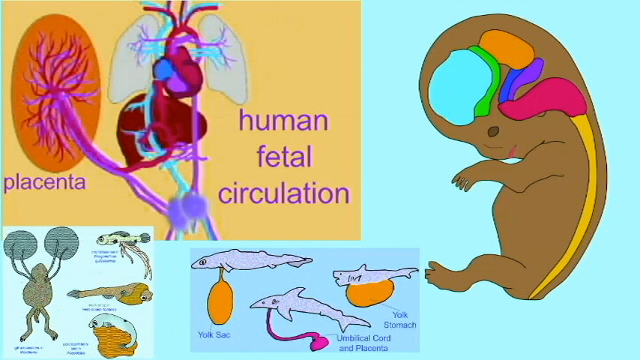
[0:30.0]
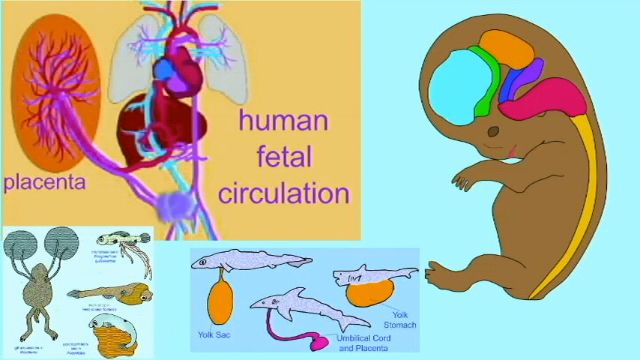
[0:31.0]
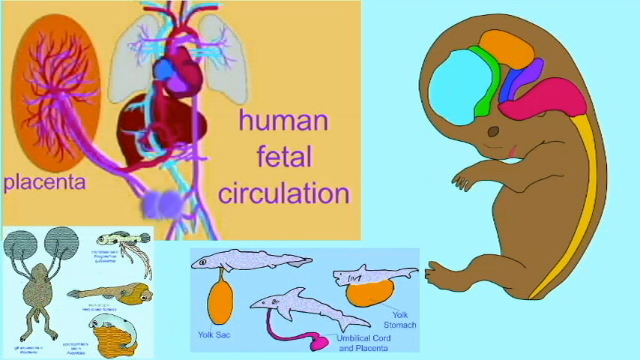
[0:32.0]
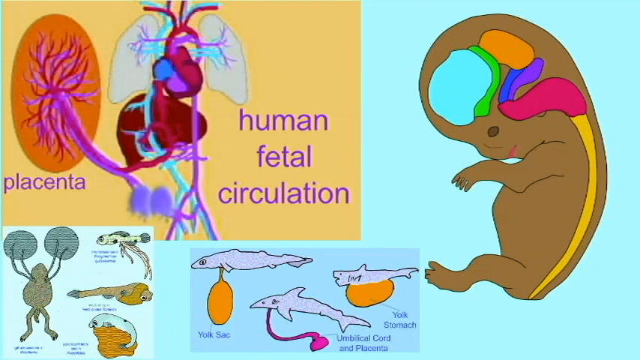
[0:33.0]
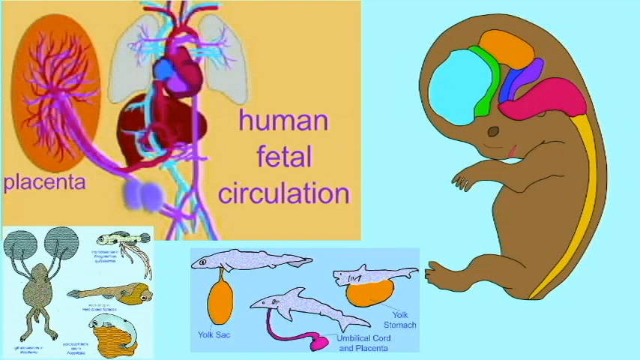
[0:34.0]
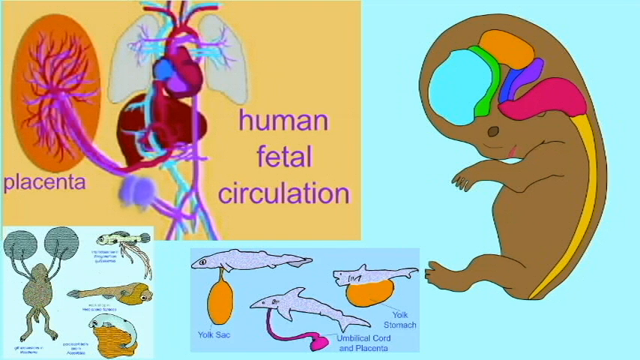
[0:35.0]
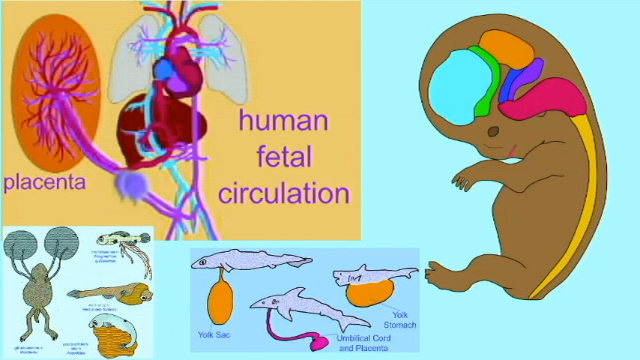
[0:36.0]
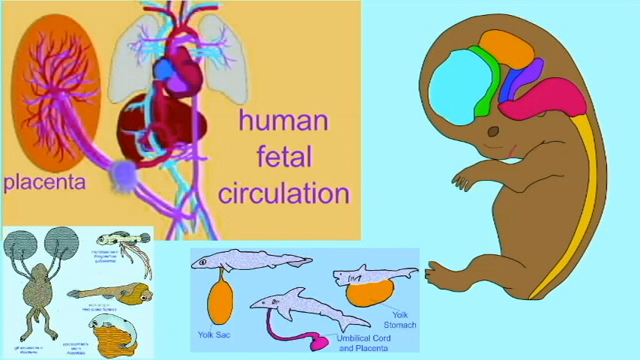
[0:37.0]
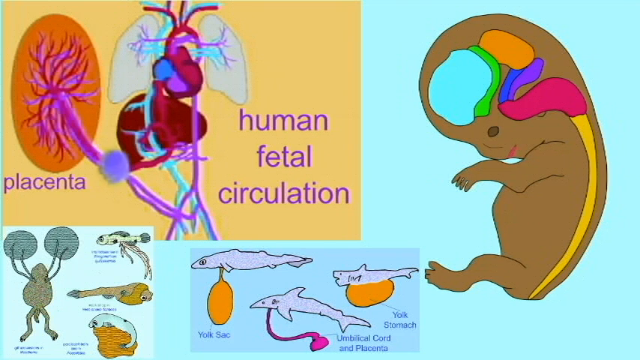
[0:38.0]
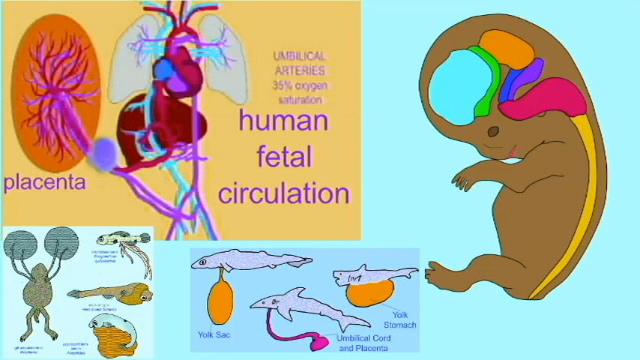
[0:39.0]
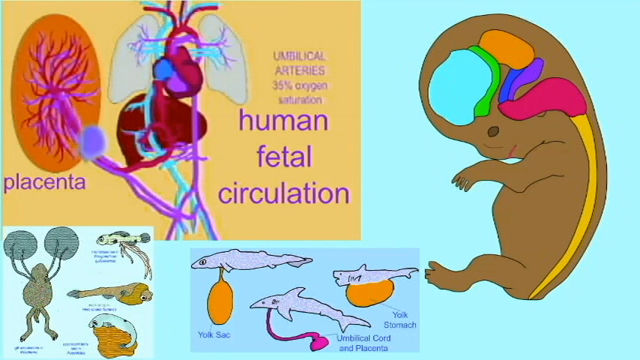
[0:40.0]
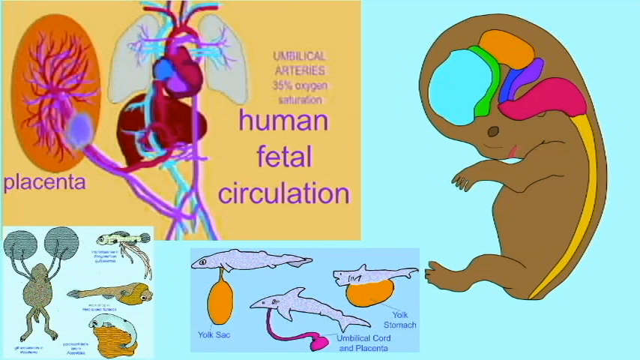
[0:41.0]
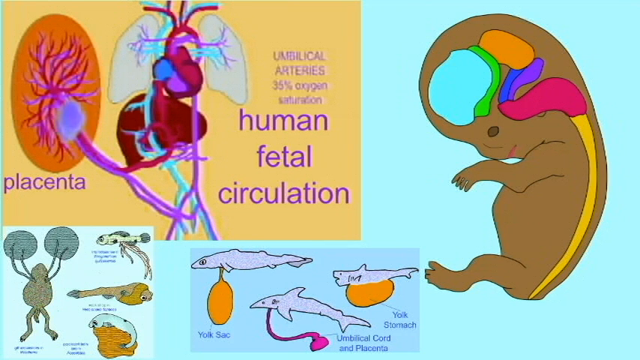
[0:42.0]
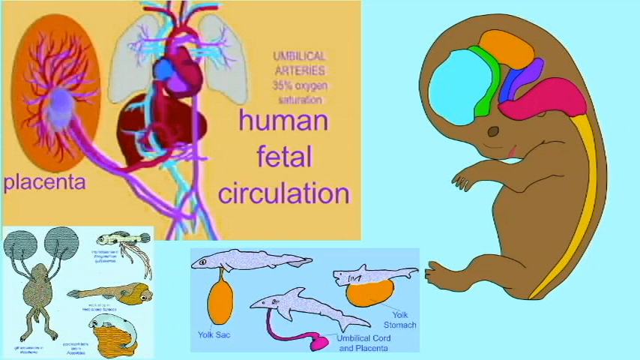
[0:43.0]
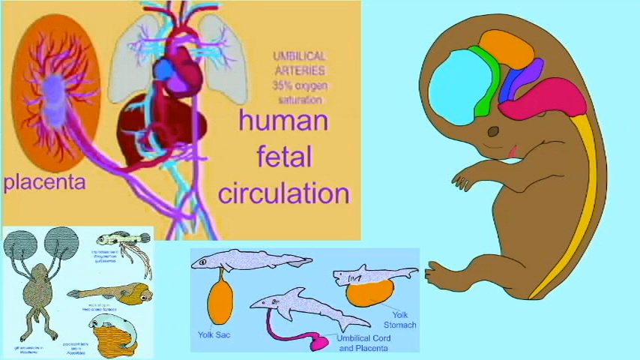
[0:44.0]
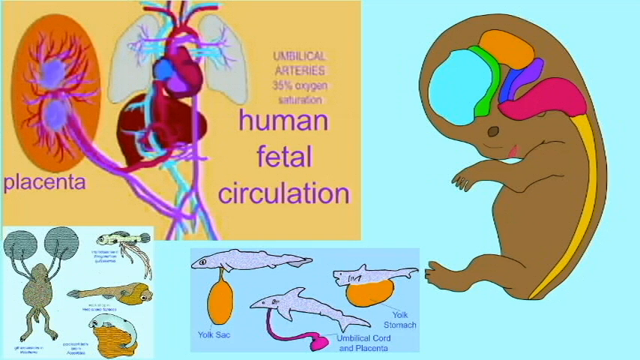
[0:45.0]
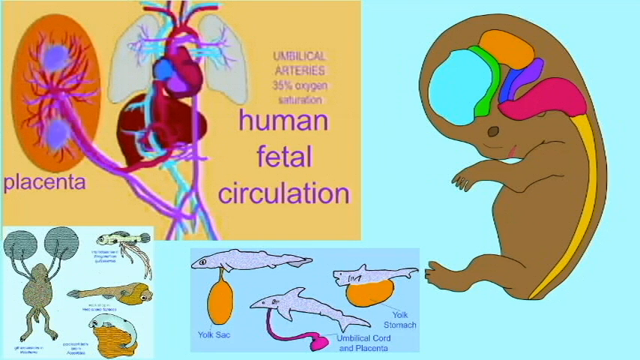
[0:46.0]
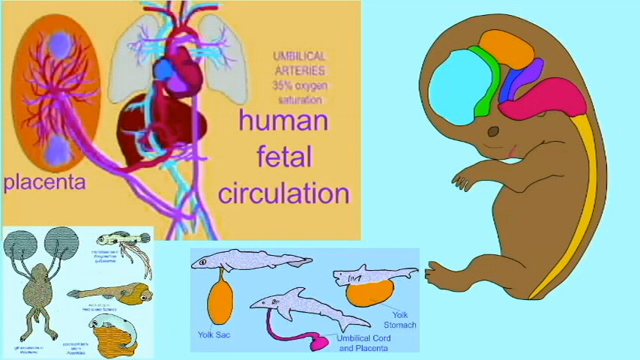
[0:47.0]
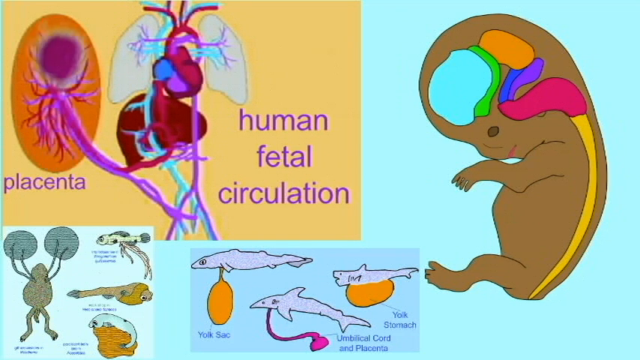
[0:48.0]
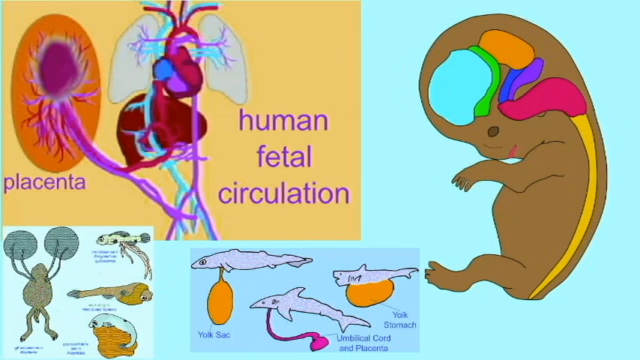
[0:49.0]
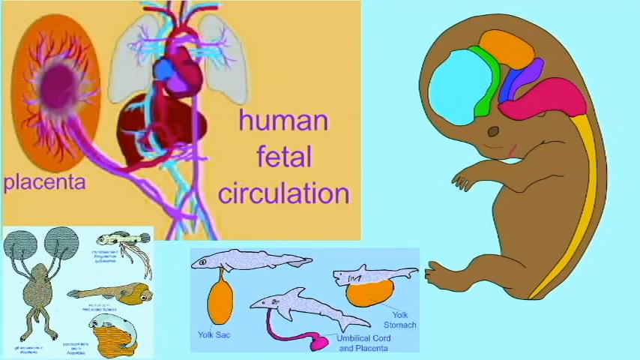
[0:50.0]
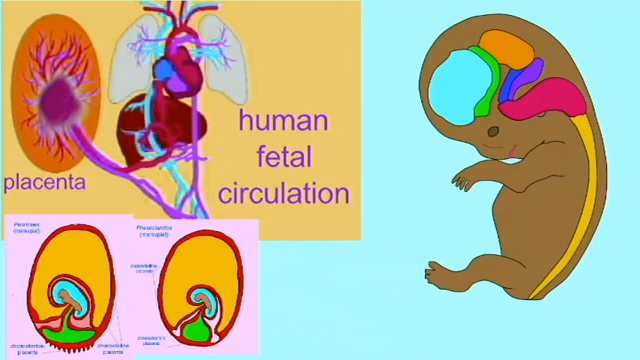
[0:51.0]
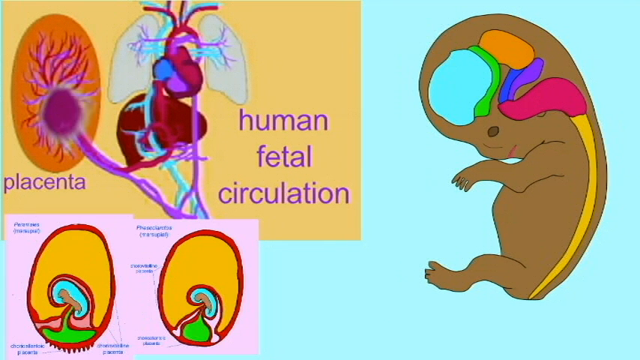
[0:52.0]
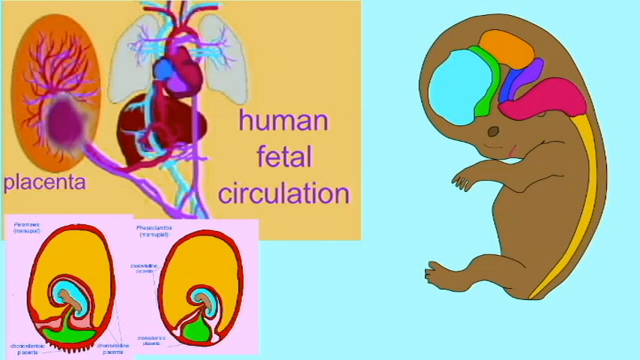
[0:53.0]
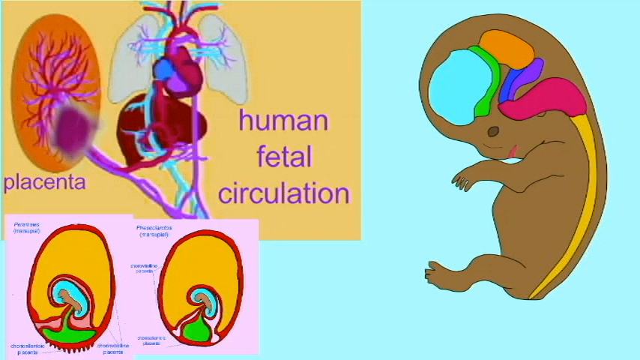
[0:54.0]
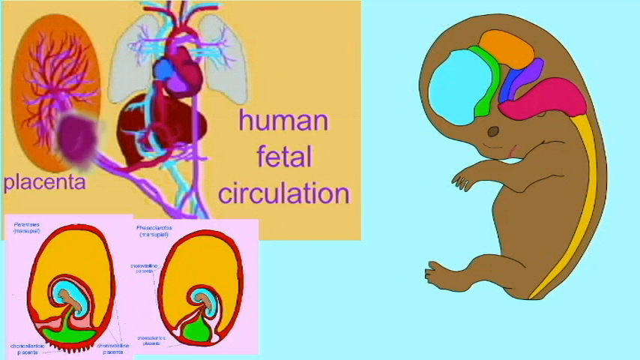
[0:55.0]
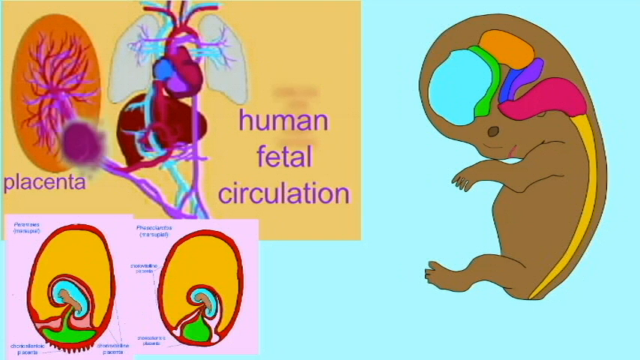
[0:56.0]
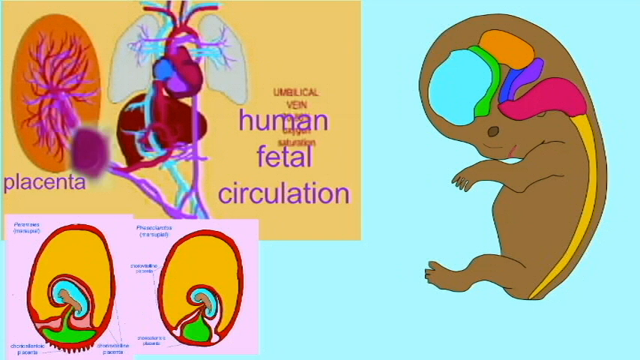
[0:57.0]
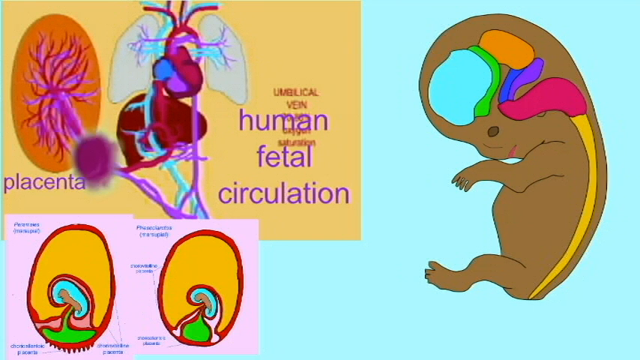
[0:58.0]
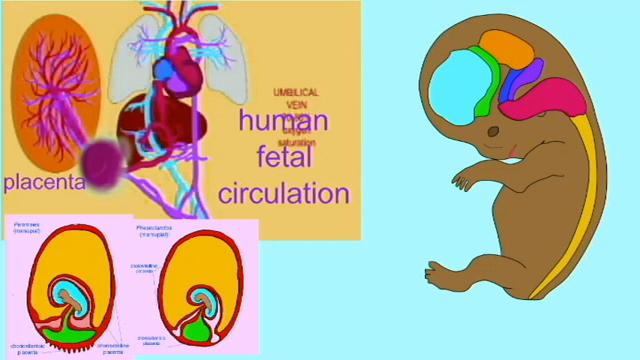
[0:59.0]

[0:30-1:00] The focus is on the human fetal circulation and placenta diagram in the top left corner of the video. Two small purple bubbles slowly travel from the central circulation through the placenta's veins and enter and diffuse into the placenta. Then a maroon-colored blob exits the placenta through the same veins and goes back to the main circulation. At the same time, the bottom left corner changes to show two different diagrams of the way the placenta attaches to the cavity of the uterus, depicting two different placental structures normally seen at two different stages of human pregnancy. Overall, the animation shows blood flowing from the central circulation toward the placenta and back from the placenta to the central circulation.